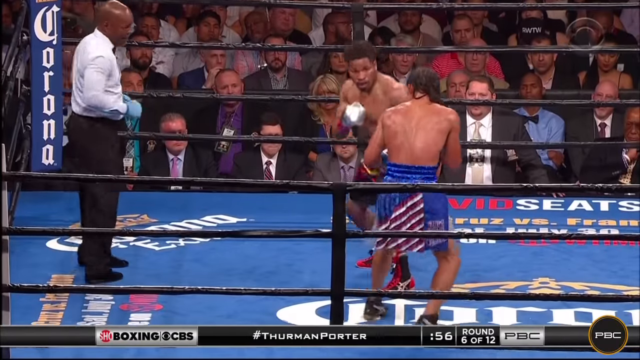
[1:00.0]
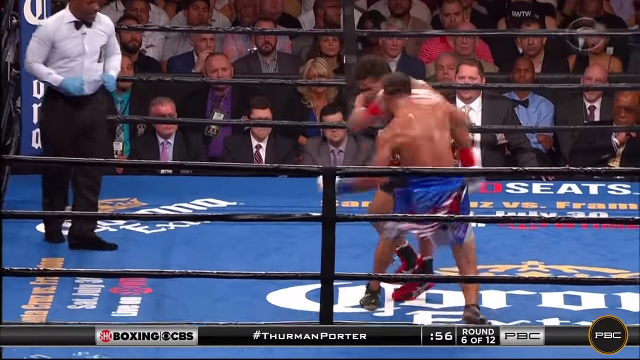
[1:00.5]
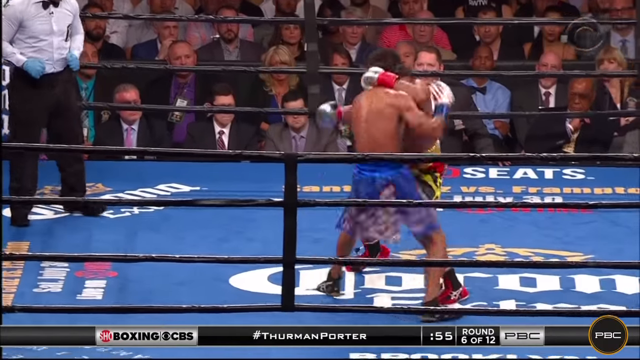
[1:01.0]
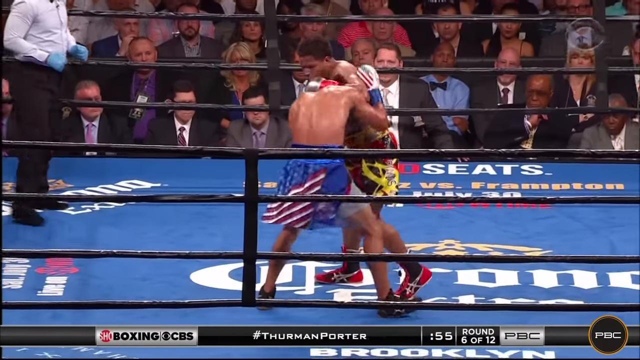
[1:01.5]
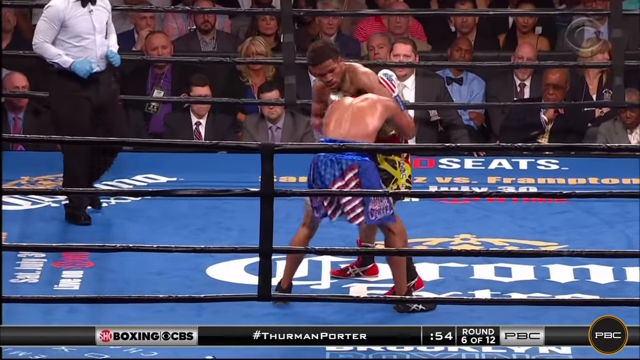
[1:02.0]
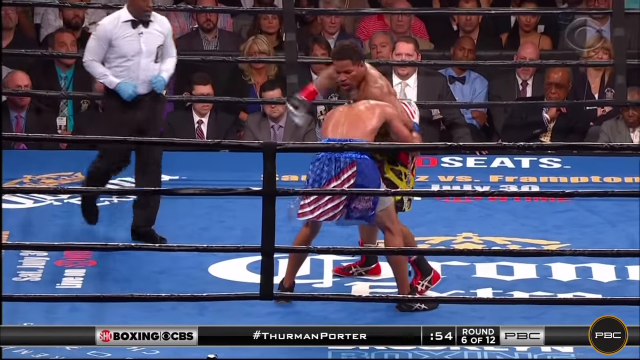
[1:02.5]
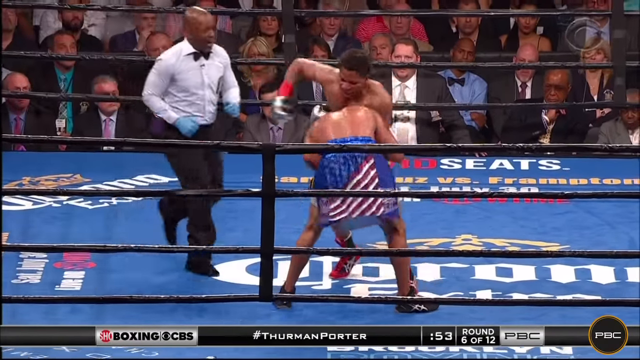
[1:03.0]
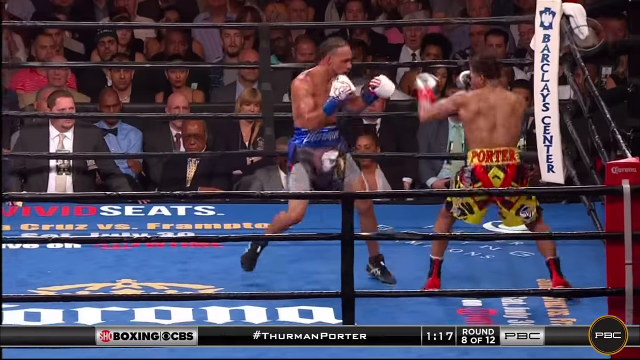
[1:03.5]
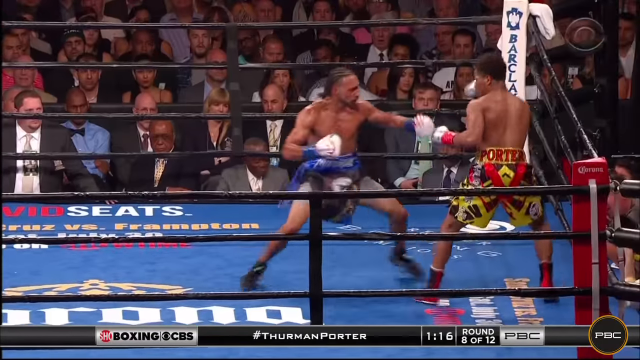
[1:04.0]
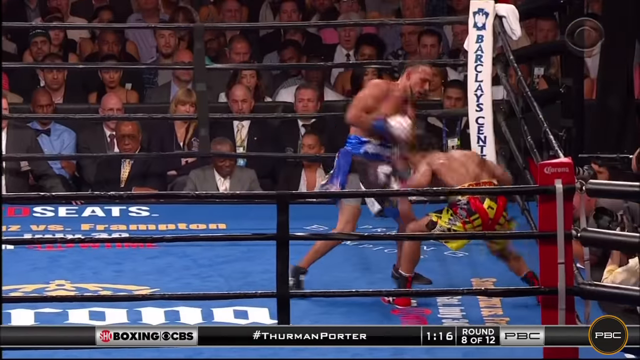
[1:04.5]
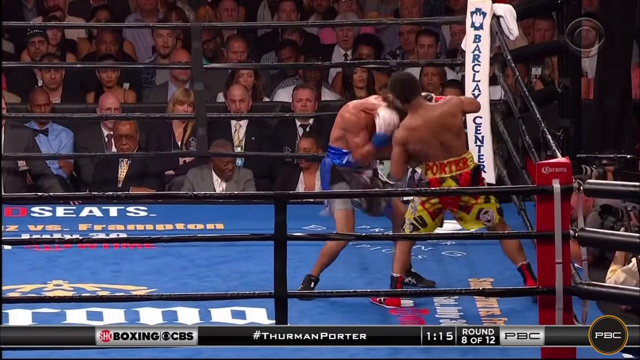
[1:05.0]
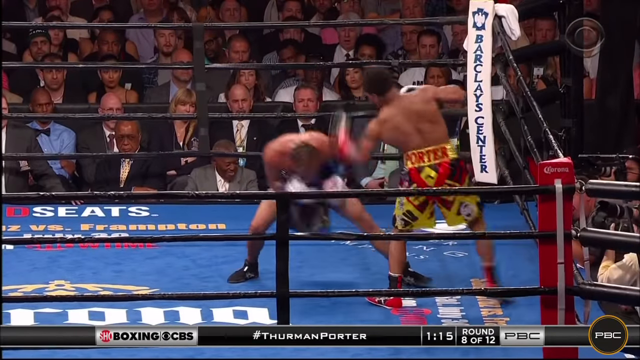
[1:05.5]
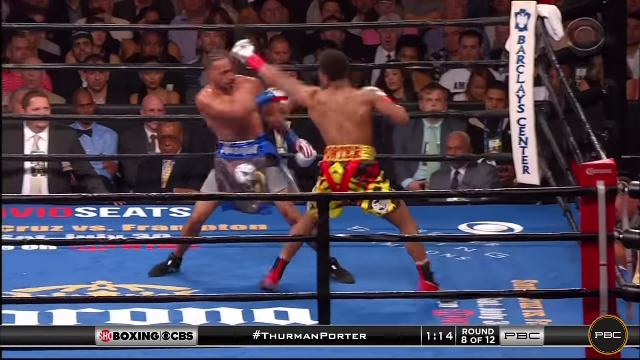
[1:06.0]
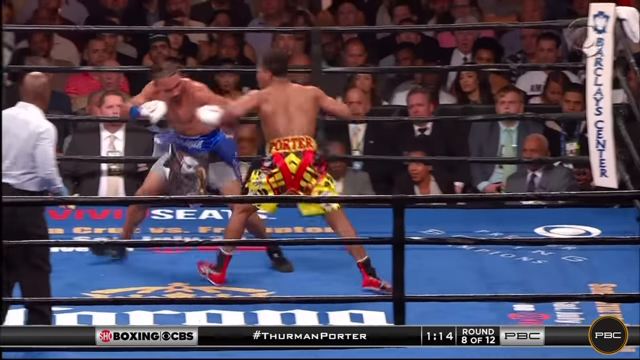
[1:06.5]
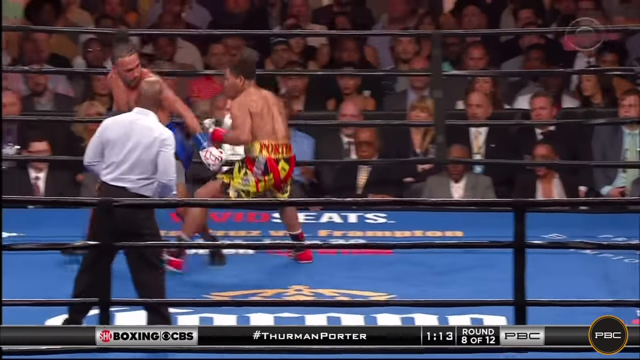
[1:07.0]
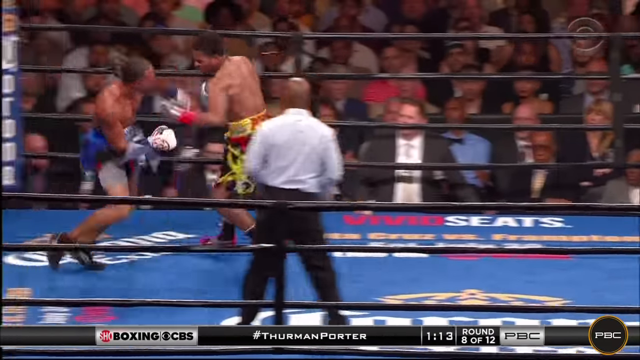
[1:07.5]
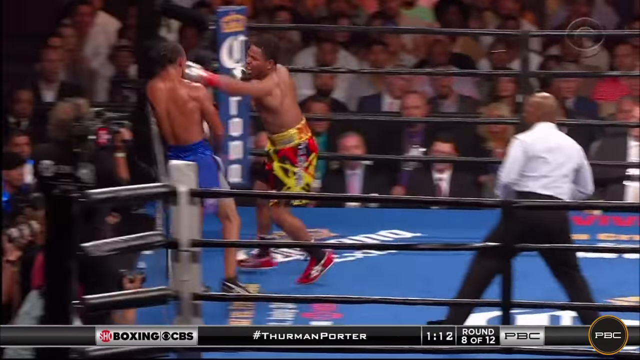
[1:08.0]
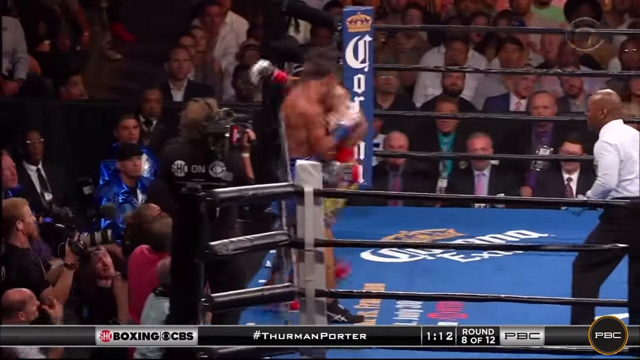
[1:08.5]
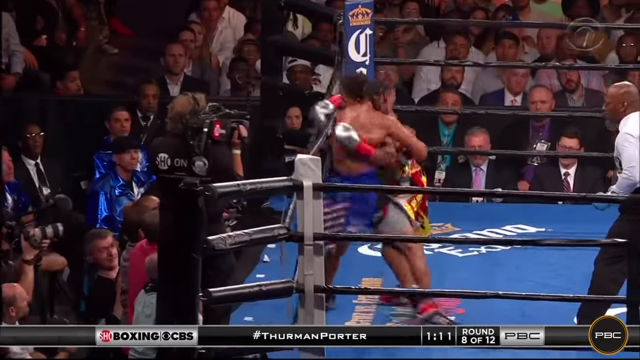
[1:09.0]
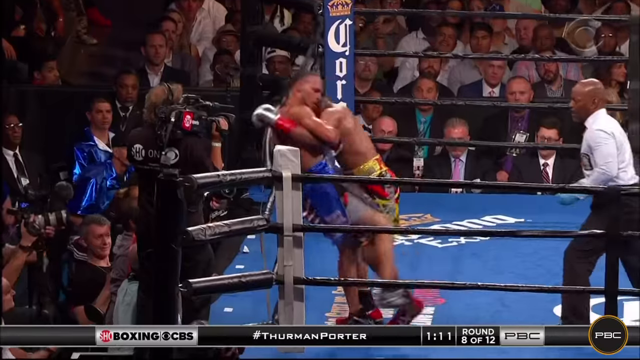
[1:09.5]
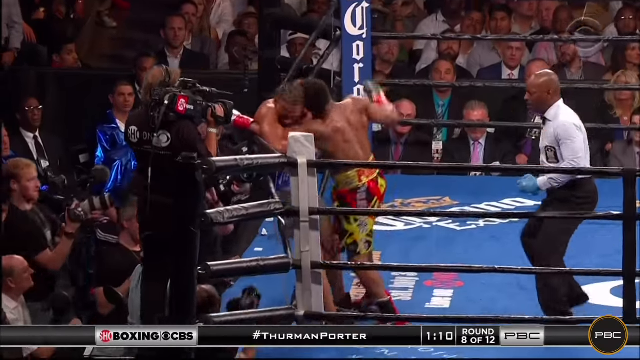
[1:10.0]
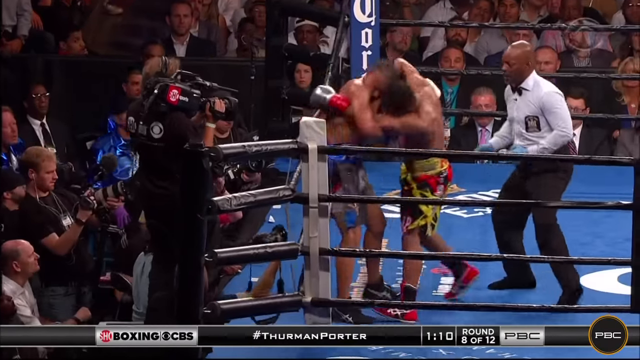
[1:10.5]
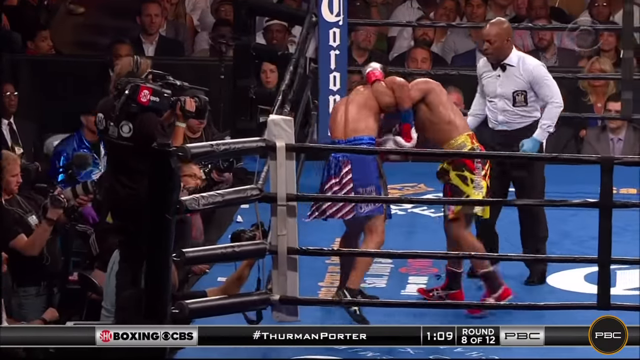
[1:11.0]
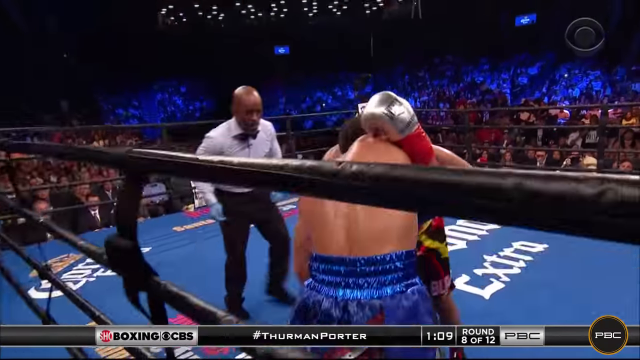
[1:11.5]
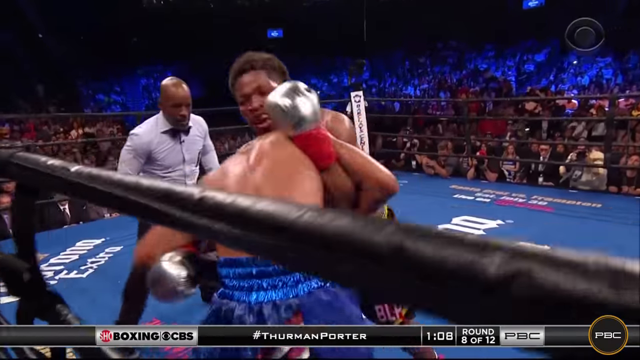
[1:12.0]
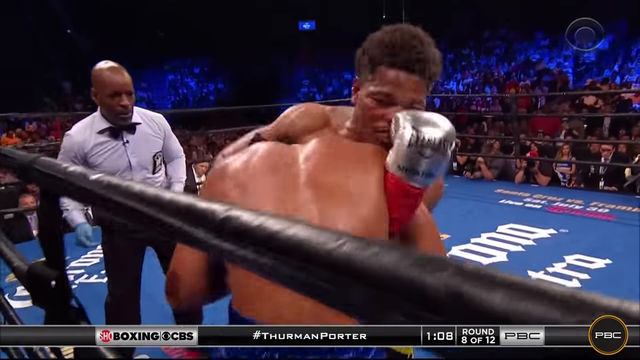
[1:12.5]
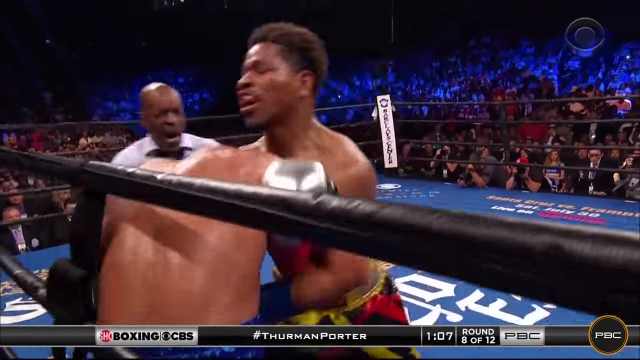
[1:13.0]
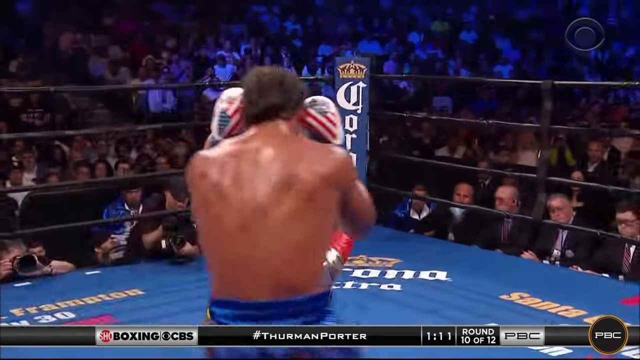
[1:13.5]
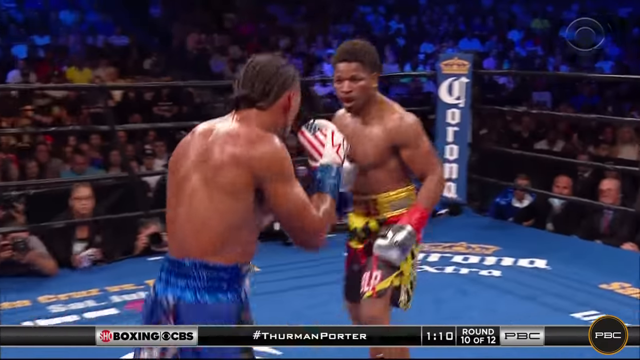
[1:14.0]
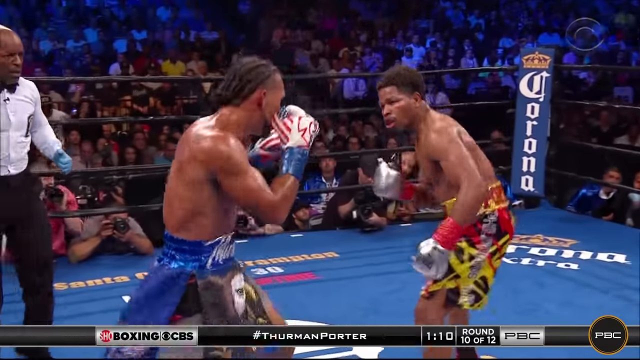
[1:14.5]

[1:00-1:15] The fighters throw wild punches at one another in the middle of the ring, and the fighter in blue shorts connects with a large right punch on the fighter in black and red shorts. They appear to get tangled up, and after a jump cut they are on the right side of the ring, with the fighter in blue shorts on the left. The fighter in yellow, black, and red shorts is crouched down while the fighter in blue shorts is in an athletic stance, ready to throw punches at him. The fighter in yellow shorts lunges a left punch at the fighter in blue, who backs away. They bounce back and forth until the fighter in yellow and black shorts gains ground, and the fighter in blue shorts begins to run away toward the left side of the ring while the fighter in yellow and black shorts pushes up against him, throwing powerful punches. They get tangled up in the left corner of the ring, with the fighter in blue shorts grabbing onto the other fighter's arm. Another jump cut shows a closer view of the two fighters in the middle of the ring, standing and looking at one another.